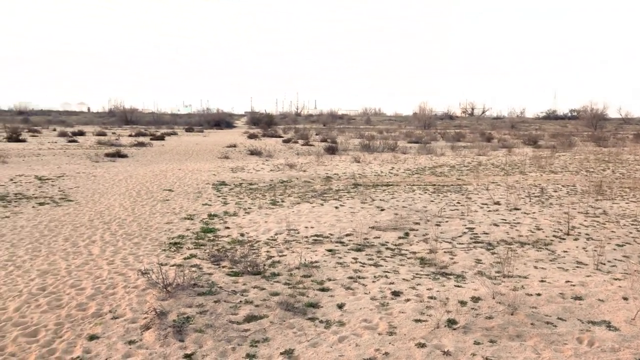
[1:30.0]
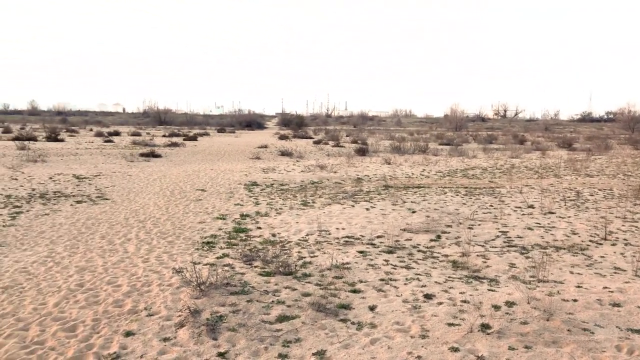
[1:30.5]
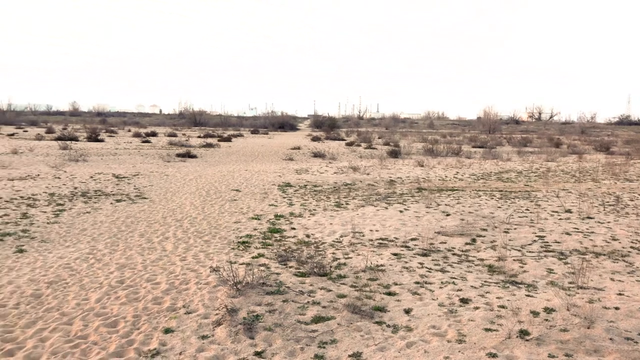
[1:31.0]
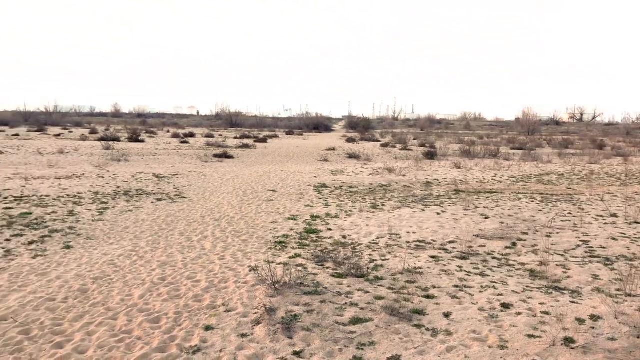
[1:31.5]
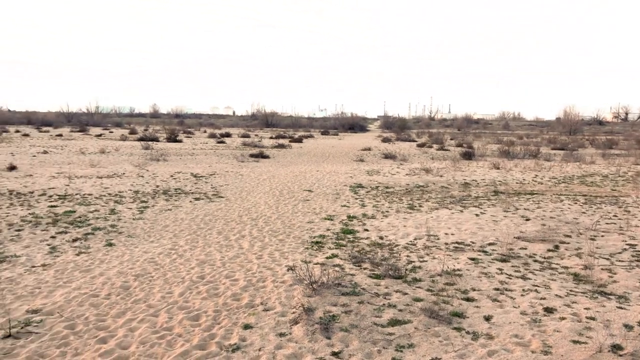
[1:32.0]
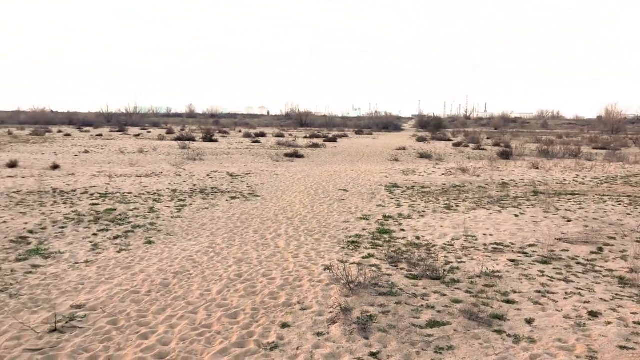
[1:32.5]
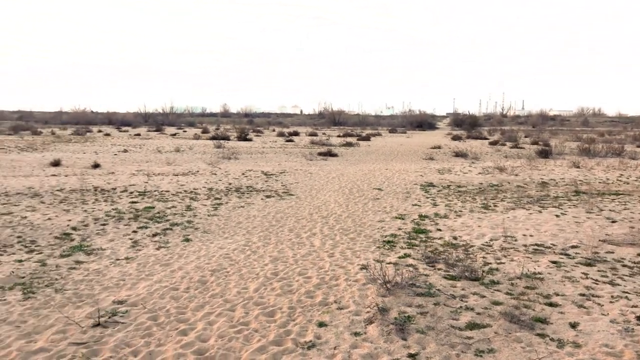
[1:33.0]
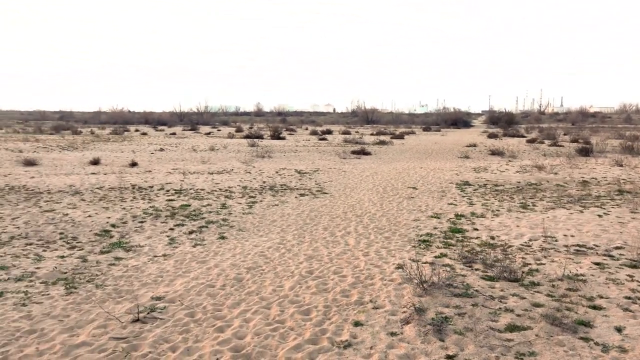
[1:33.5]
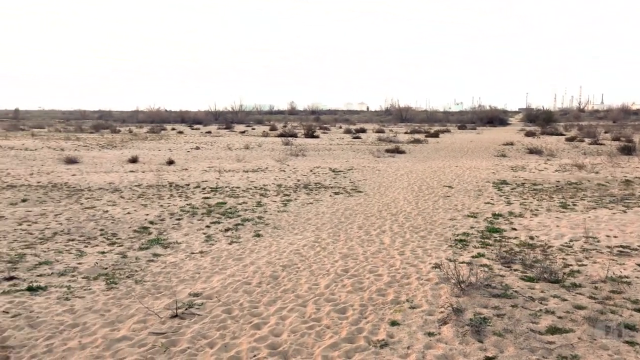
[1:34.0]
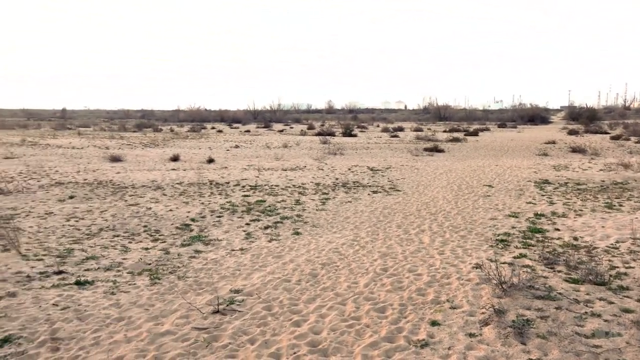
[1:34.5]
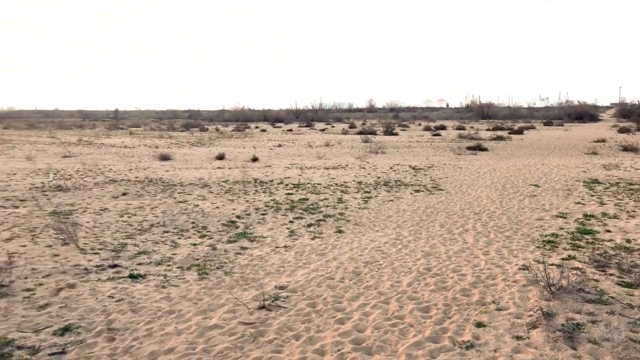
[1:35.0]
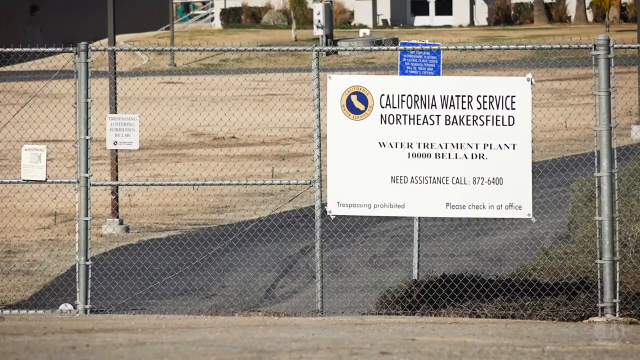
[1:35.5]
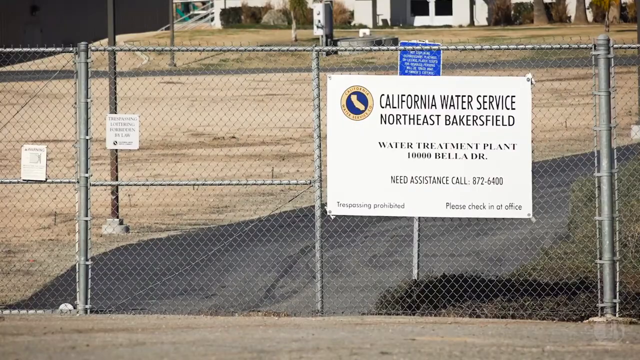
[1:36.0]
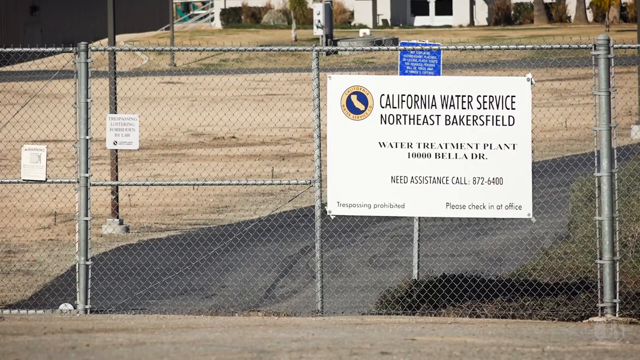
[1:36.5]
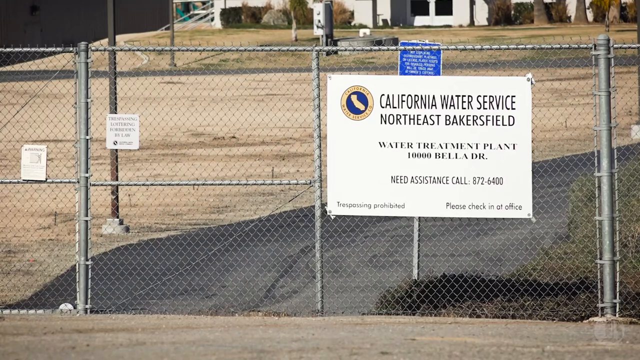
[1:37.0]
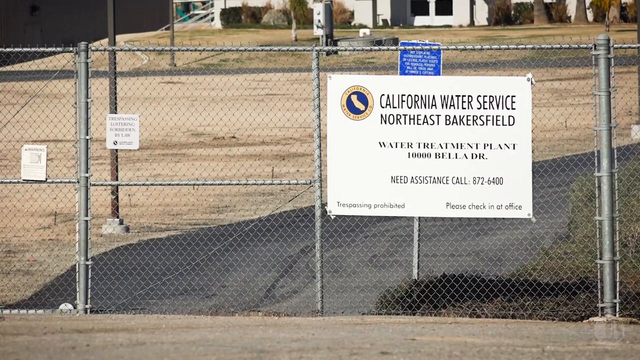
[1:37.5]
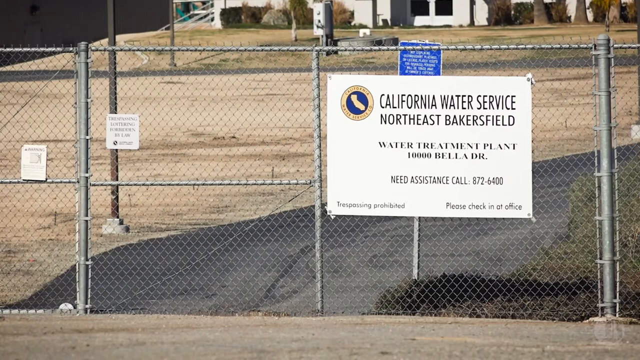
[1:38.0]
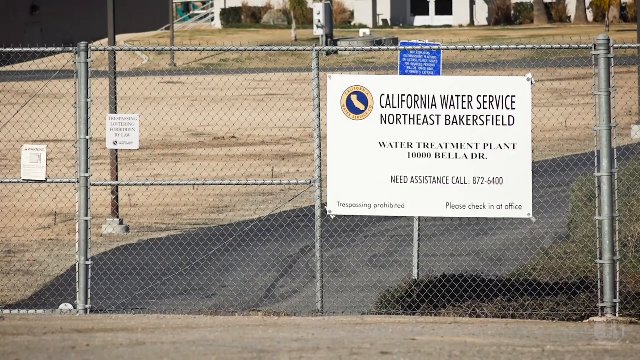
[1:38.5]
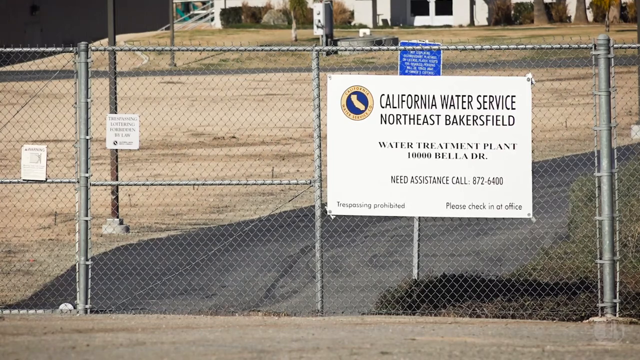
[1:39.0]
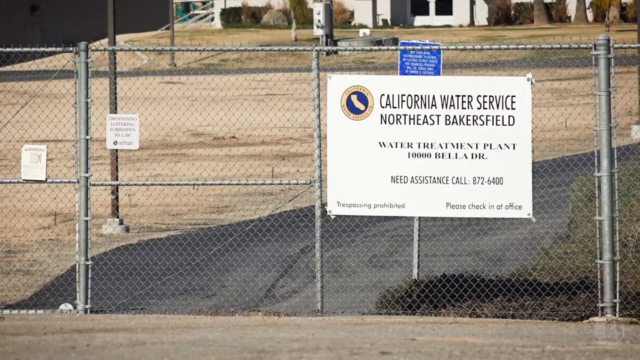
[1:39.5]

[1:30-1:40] The camera hovers to the left over a desert-like area. Tracks and marks run through a patch of sand that goes all the way to the back of the screen. The sky is completely covered with clouds but very bright. Continuing to the left, the view returns to dry, sparse ground with little patches of grass and dead bushes in the back. Then a fence appears with a big white sign with a logo in the upper left: a blue dot with a yellow border and a yellow image of California. The sign says "California Water Service Northeast Bakerfield," with "water treatment plant" below, along with the address and a phone number. A couple of smaller signs are on the fence, and a blue informational sign is on a pole behind the fence. An asphalt road leads into the property, with some building structures in the back and a dirt or sand lot on the left side.